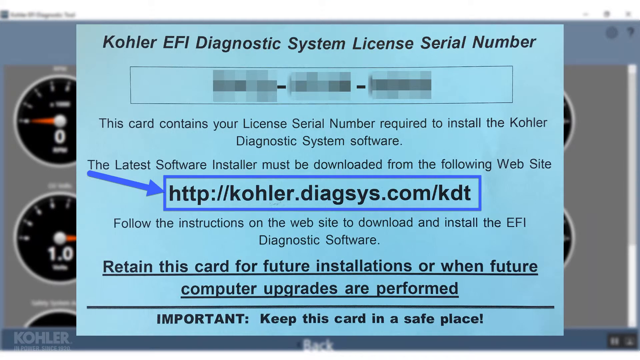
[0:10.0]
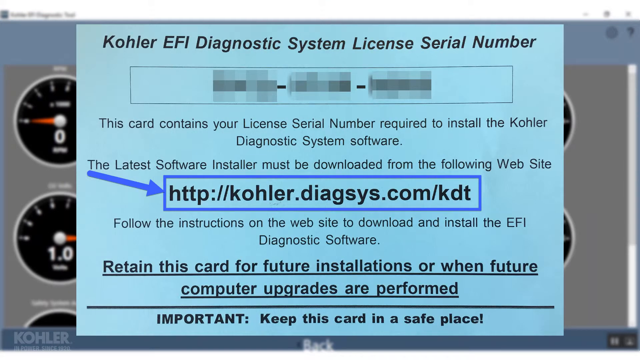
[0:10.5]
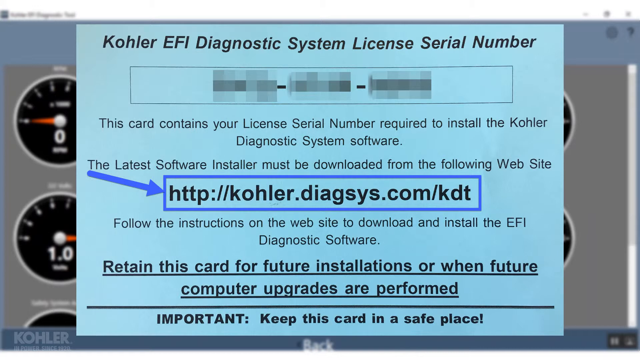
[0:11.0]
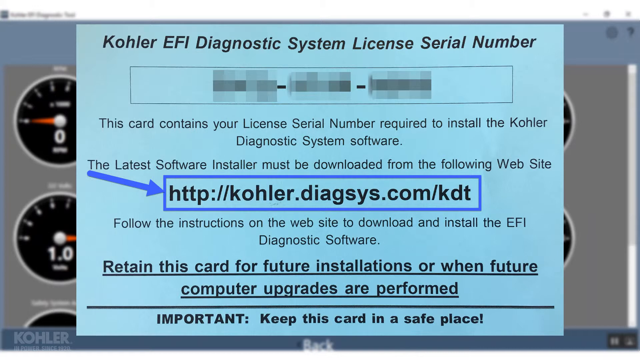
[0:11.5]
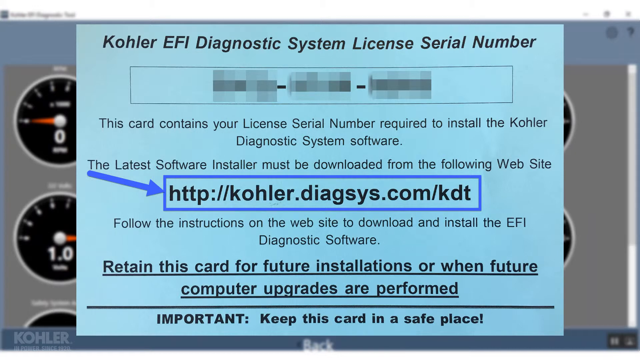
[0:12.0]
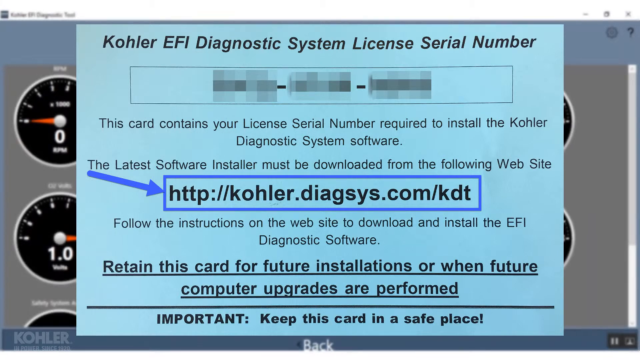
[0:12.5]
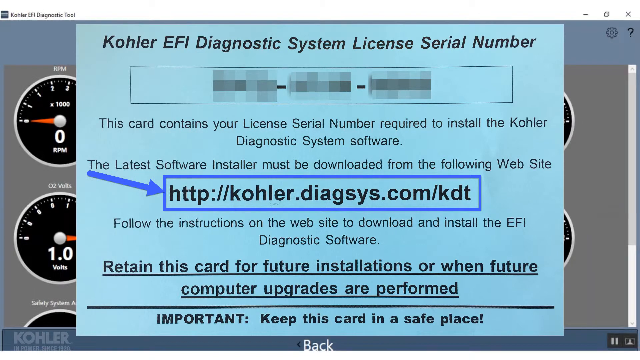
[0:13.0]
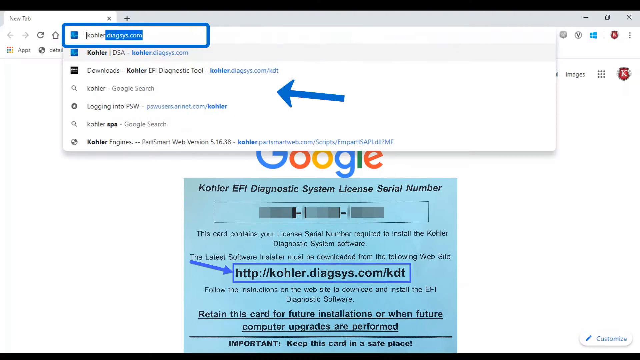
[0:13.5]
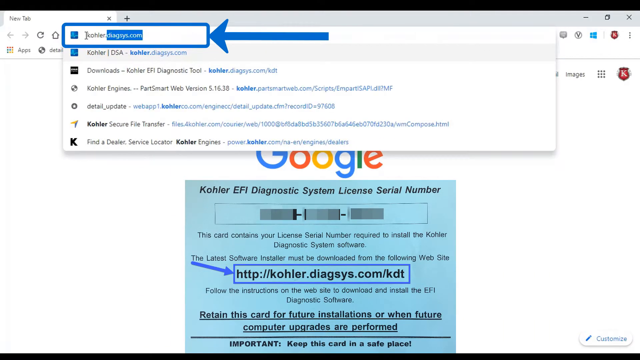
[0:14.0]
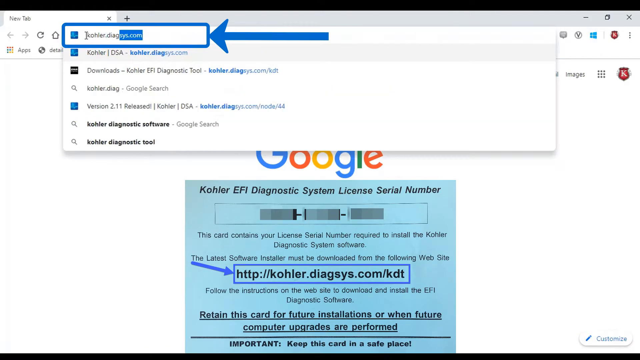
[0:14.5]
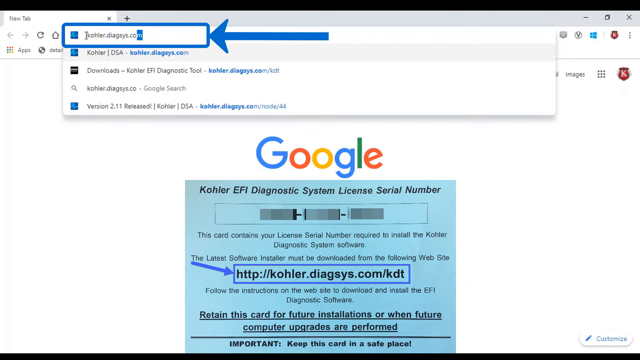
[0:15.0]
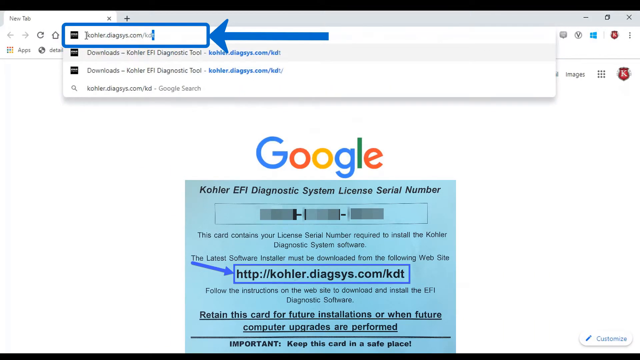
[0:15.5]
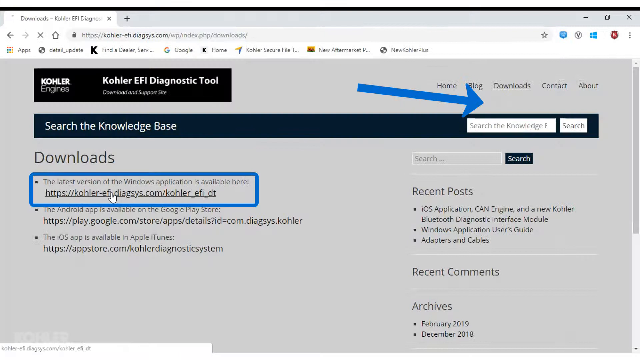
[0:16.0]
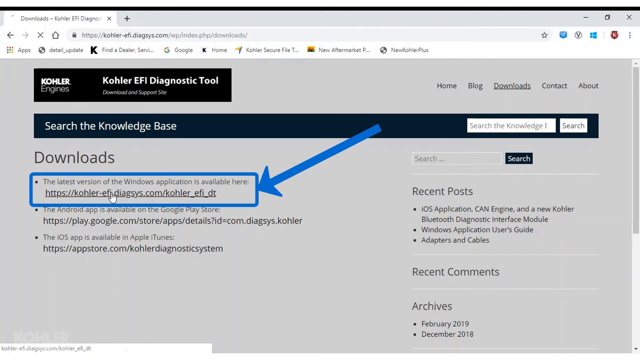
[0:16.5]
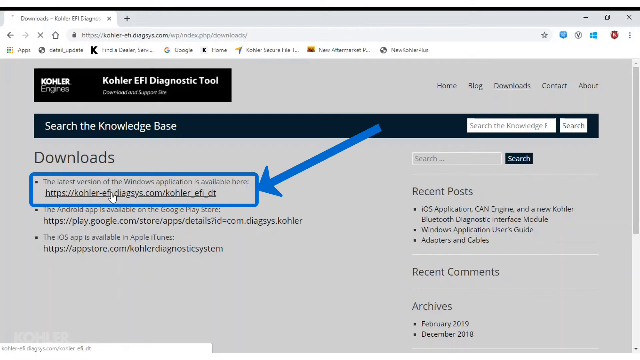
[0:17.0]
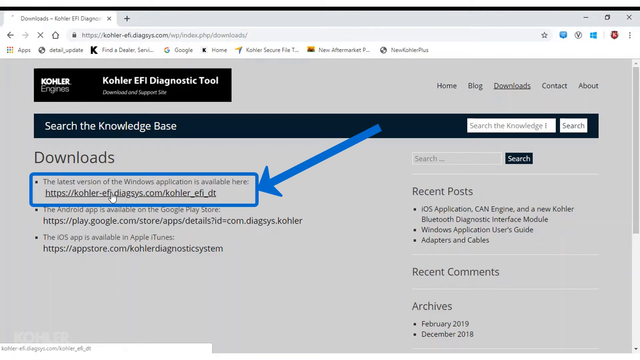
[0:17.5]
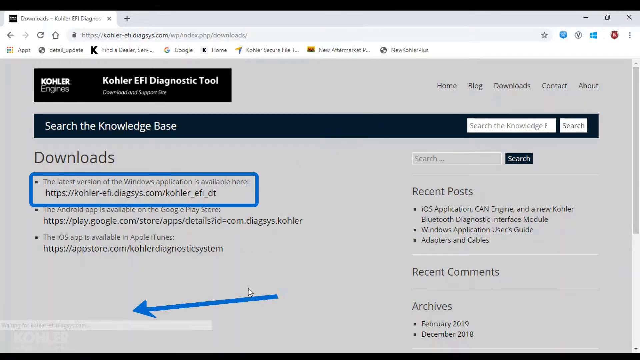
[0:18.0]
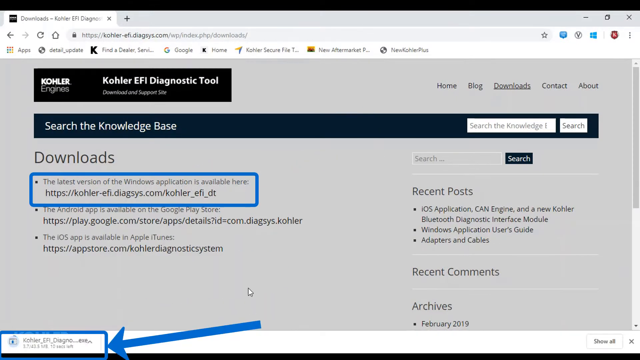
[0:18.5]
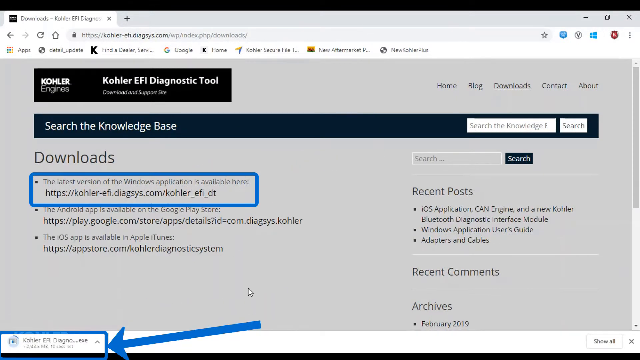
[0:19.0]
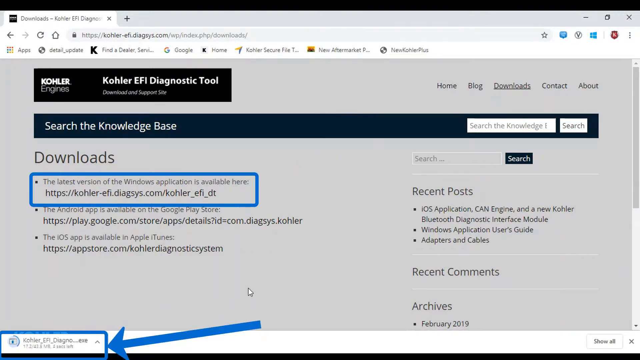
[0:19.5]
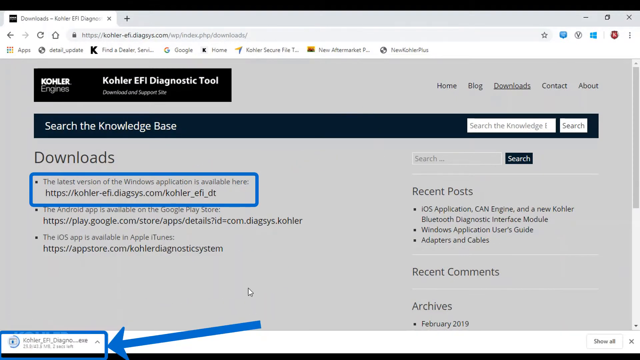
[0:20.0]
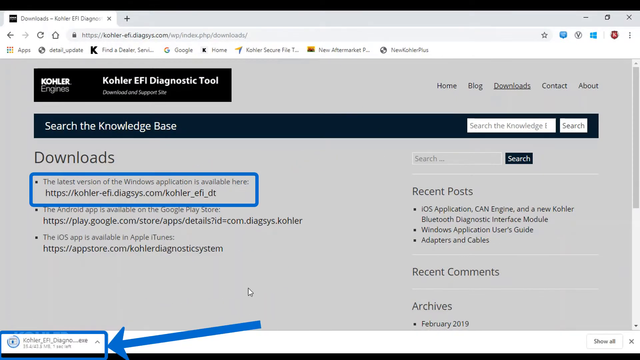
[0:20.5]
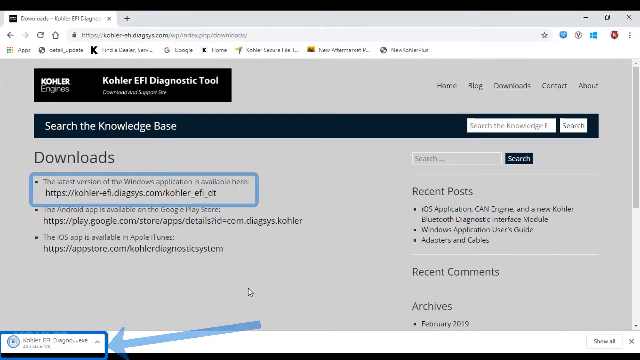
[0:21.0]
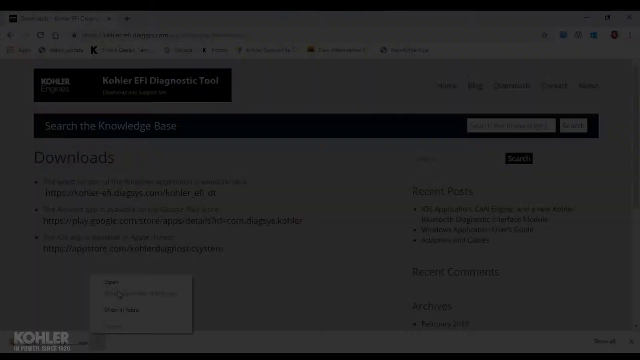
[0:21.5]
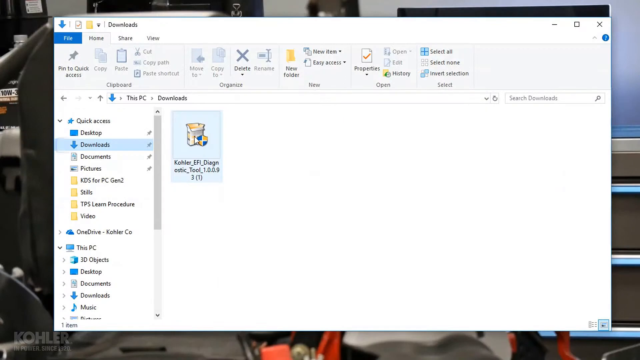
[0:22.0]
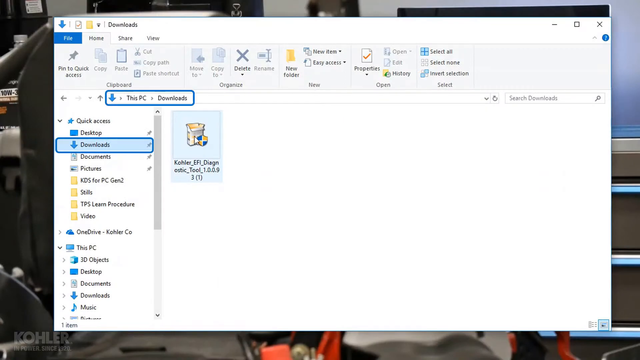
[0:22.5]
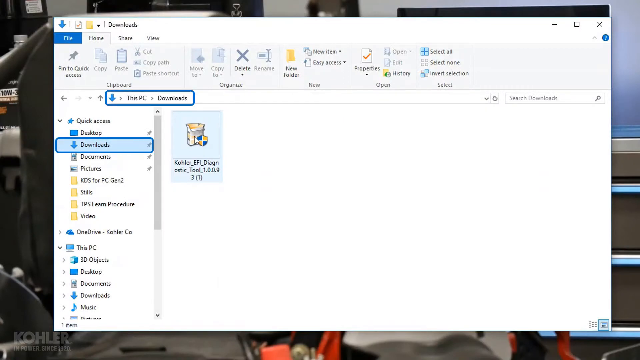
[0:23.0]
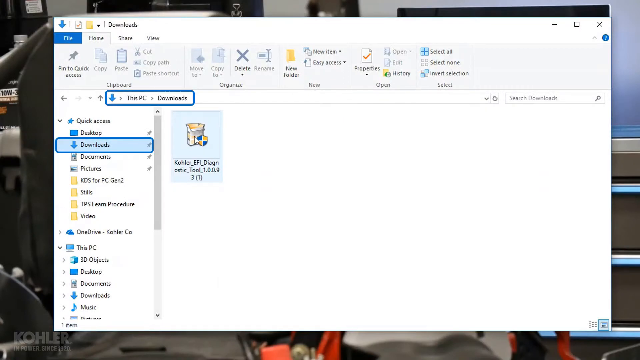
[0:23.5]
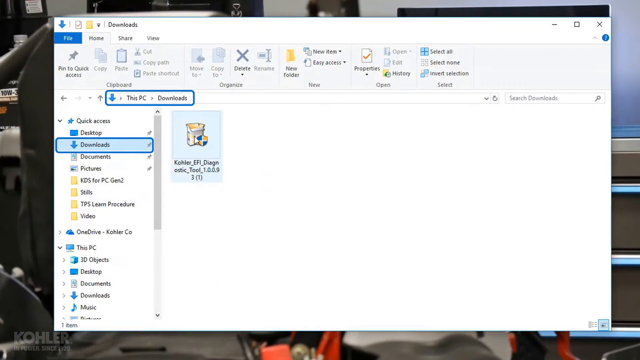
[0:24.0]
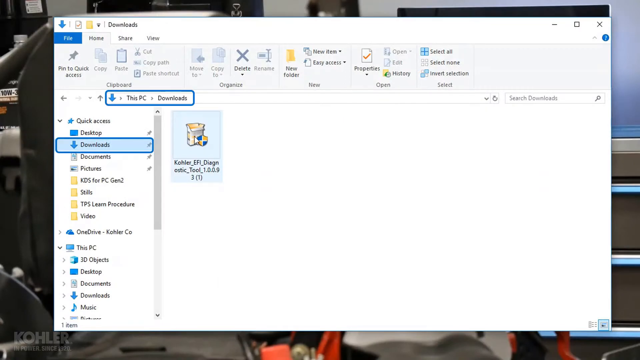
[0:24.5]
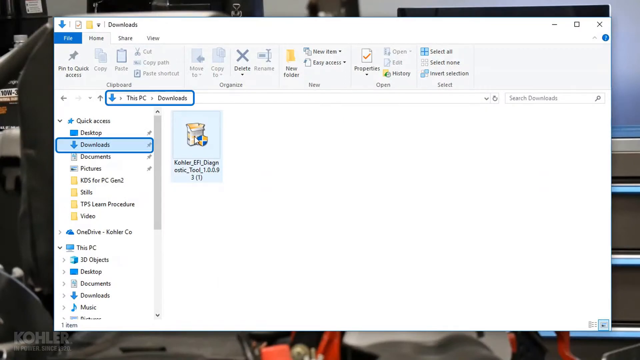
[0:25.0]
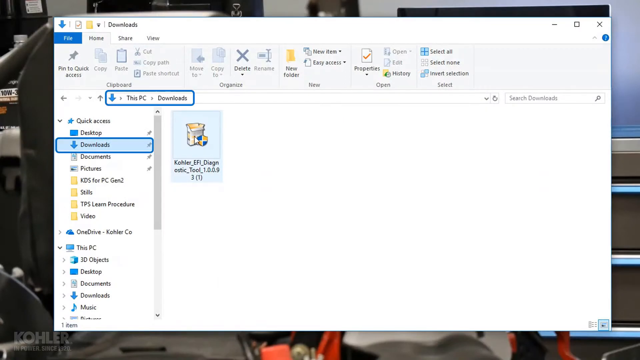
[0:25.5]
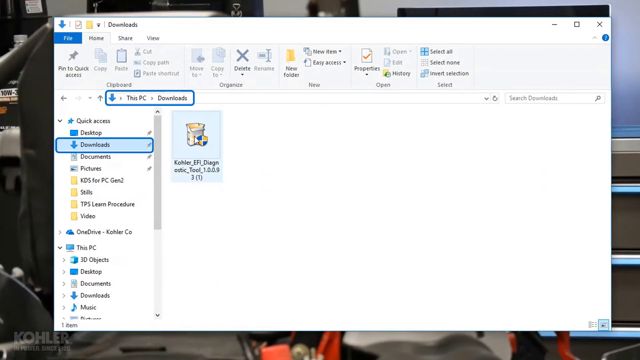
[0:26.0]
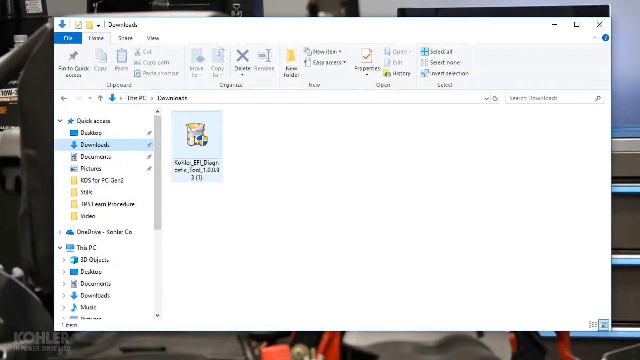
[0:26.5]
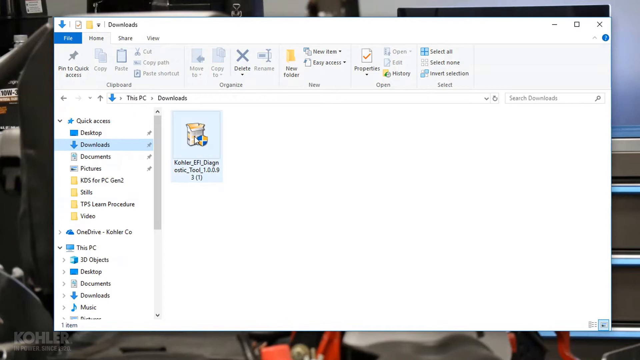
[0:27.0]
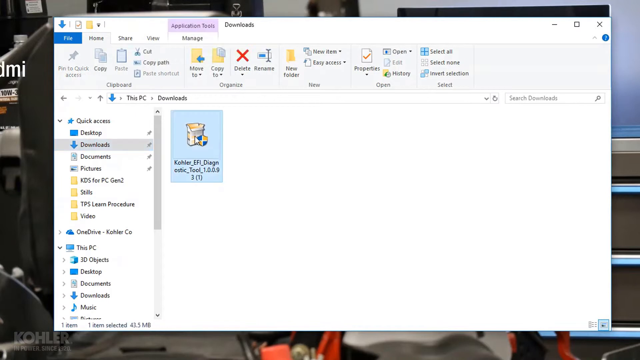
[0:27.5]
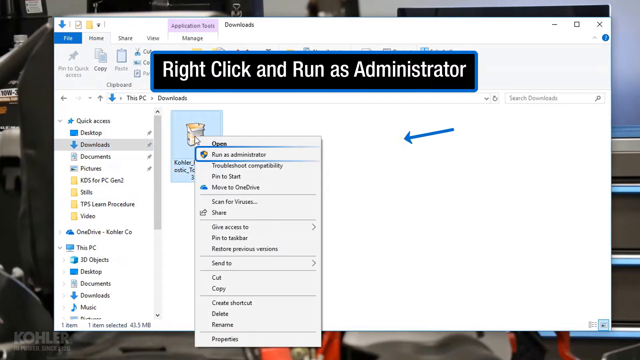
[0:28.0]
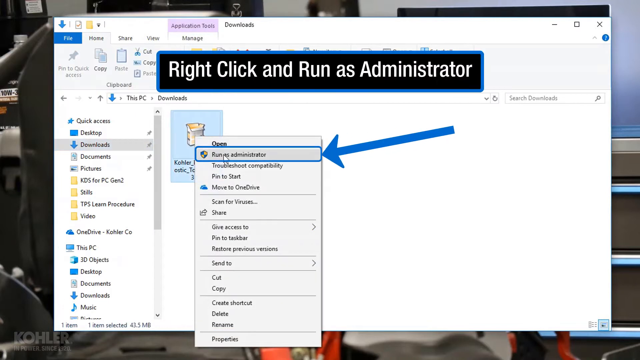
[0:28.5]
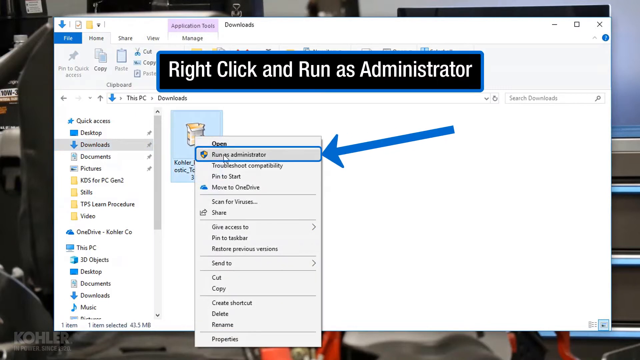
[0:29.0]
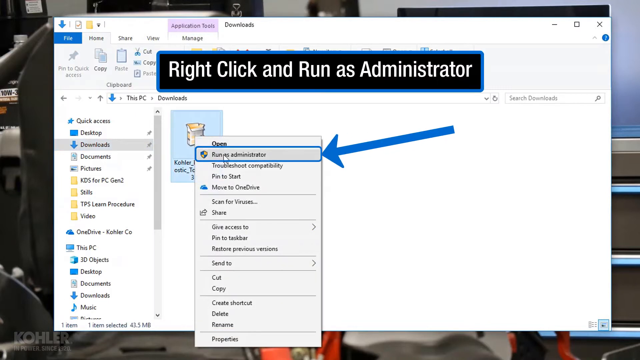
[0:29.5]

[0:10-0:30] The video shows how to get the card containing the license serial number, which is required to install the KOHLER diagnostic system software. It gives instructions on where to get the latest software installer and where it must be downloaded, and the download site is shown: kohler.diagsys.com.kdt. Instructions on the website explain how to download and install the EFI diagnostic software, and the steps are laid out one by one: going on Google, accessing the website, downloading the installer, storing it in the files and installing it. The focus is on downloading and installing the KOHLER Diagnostic System software.